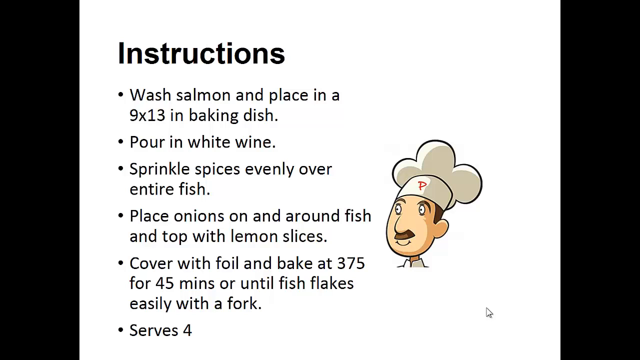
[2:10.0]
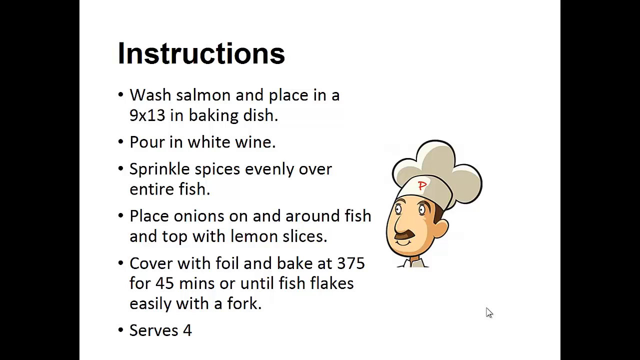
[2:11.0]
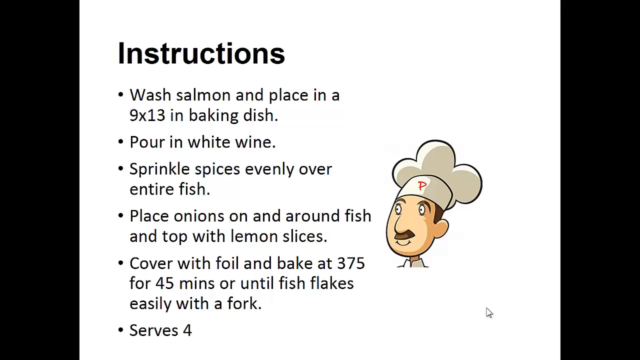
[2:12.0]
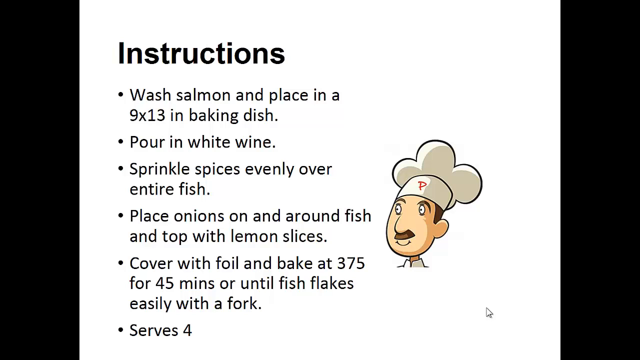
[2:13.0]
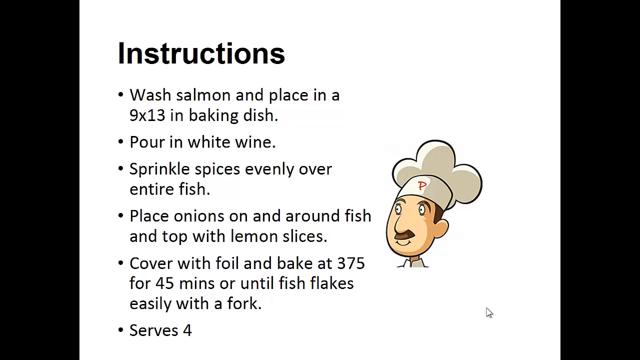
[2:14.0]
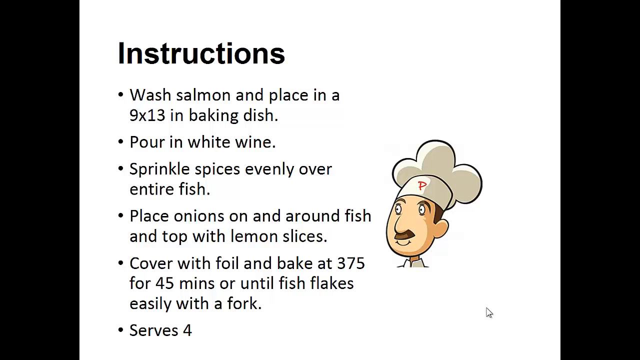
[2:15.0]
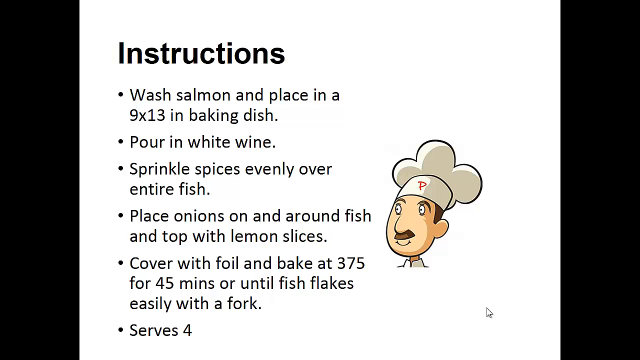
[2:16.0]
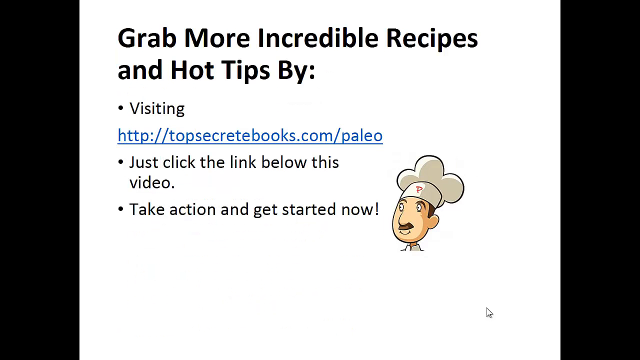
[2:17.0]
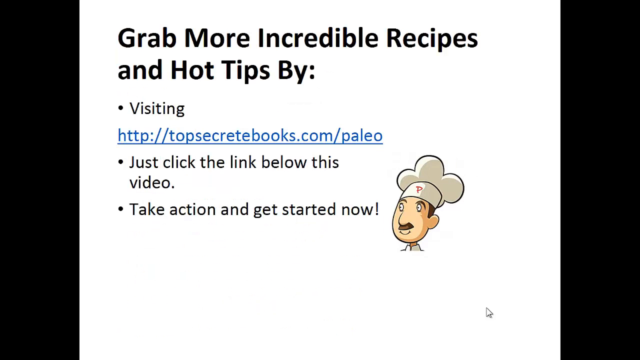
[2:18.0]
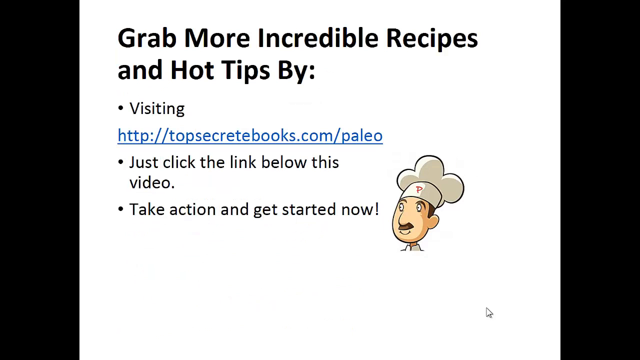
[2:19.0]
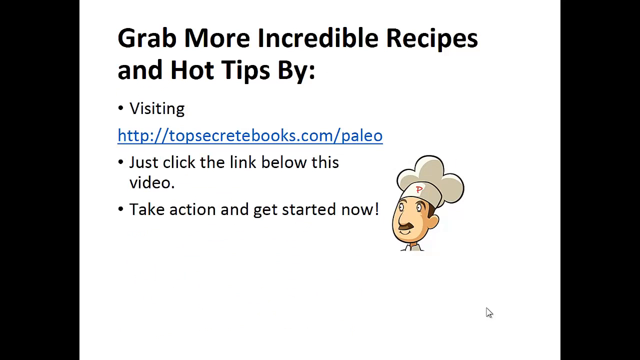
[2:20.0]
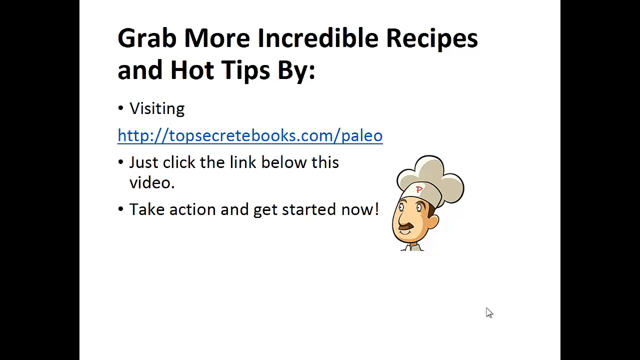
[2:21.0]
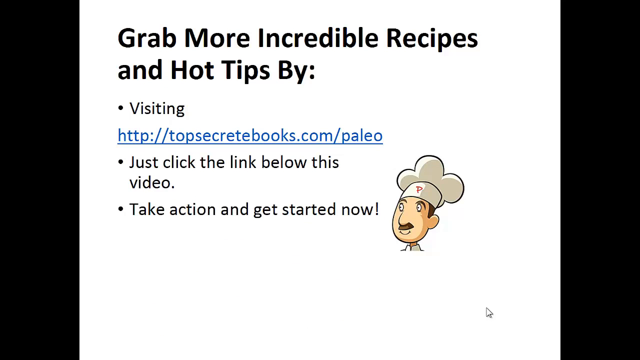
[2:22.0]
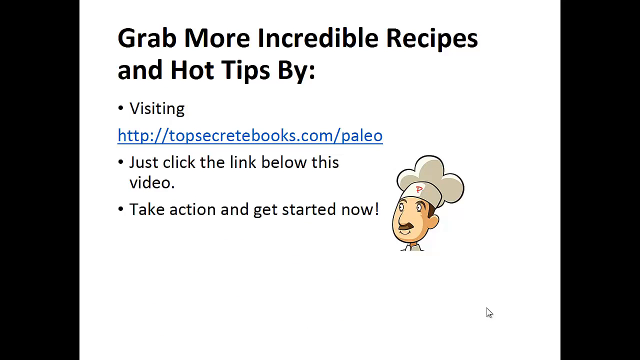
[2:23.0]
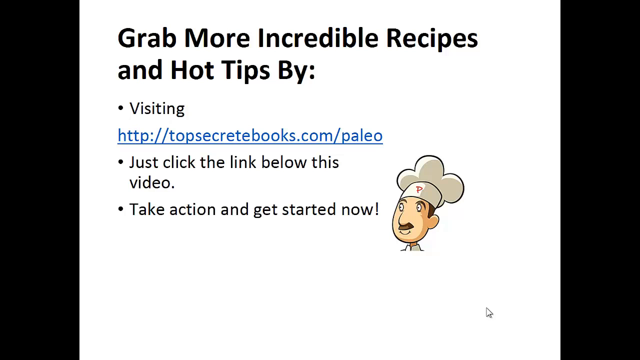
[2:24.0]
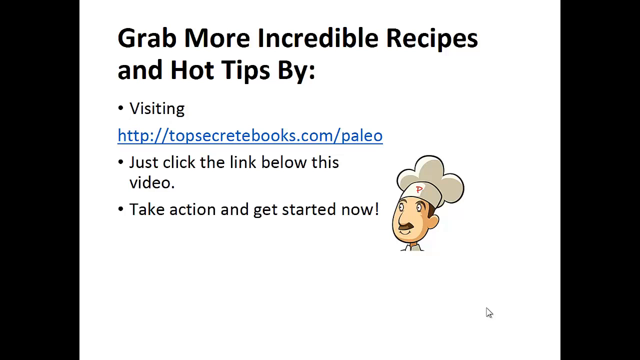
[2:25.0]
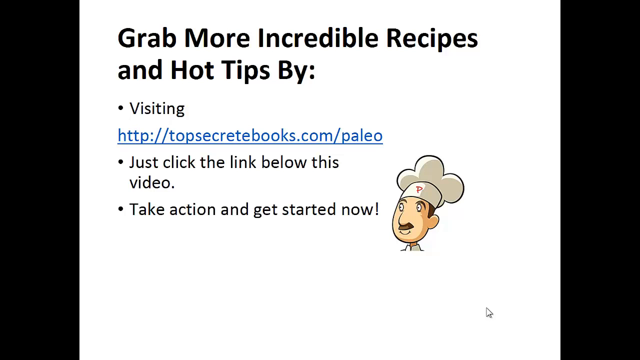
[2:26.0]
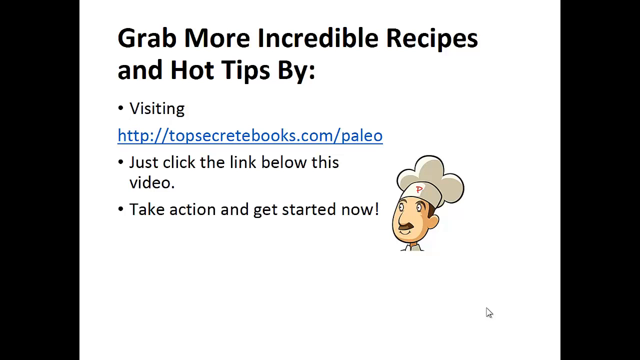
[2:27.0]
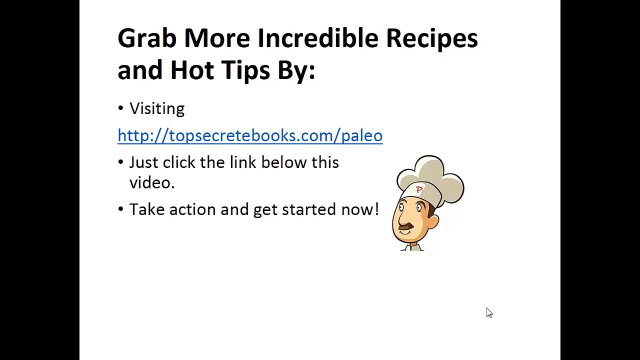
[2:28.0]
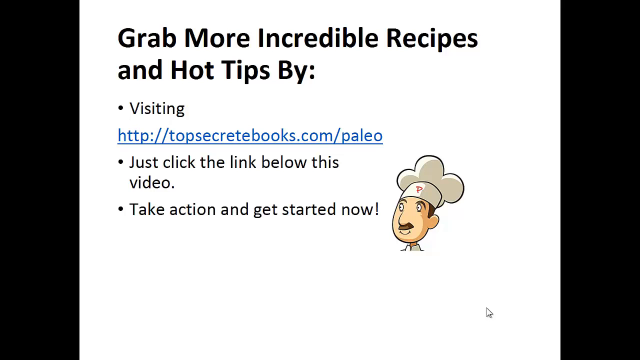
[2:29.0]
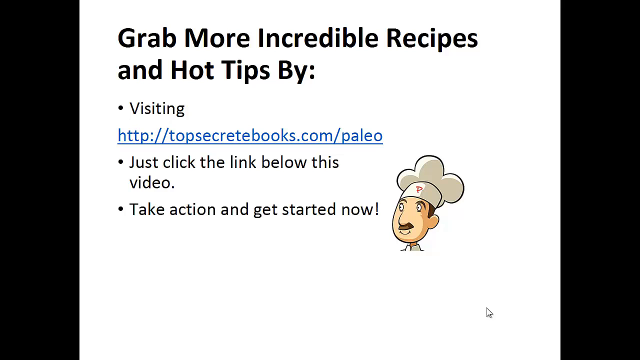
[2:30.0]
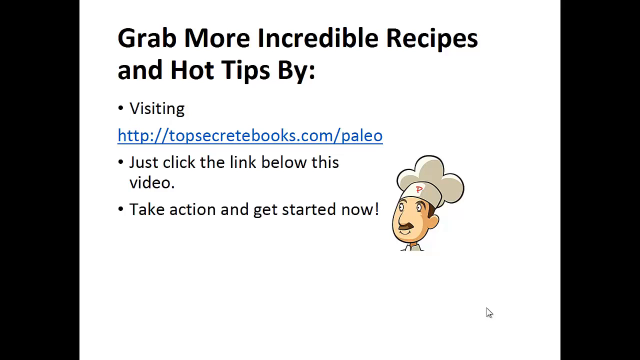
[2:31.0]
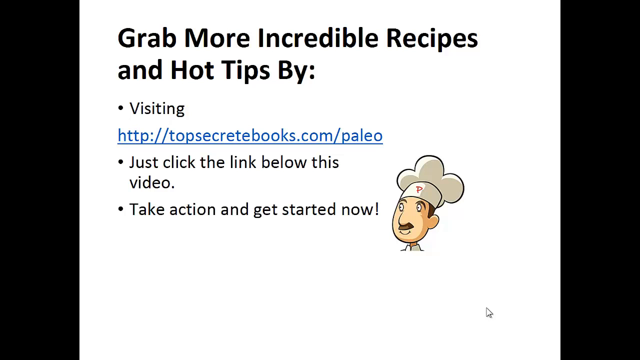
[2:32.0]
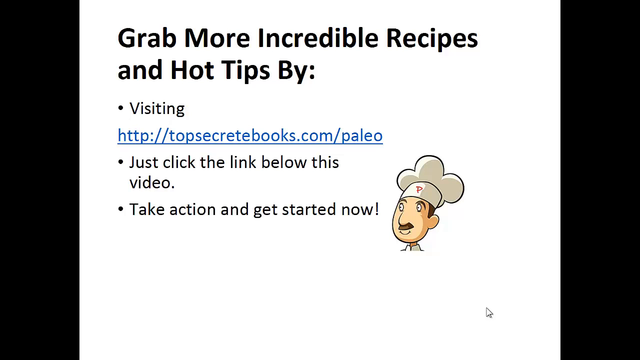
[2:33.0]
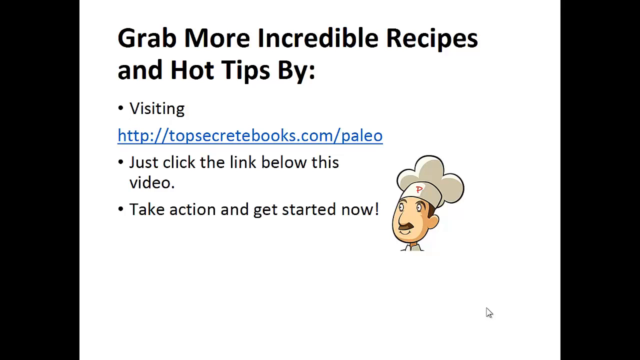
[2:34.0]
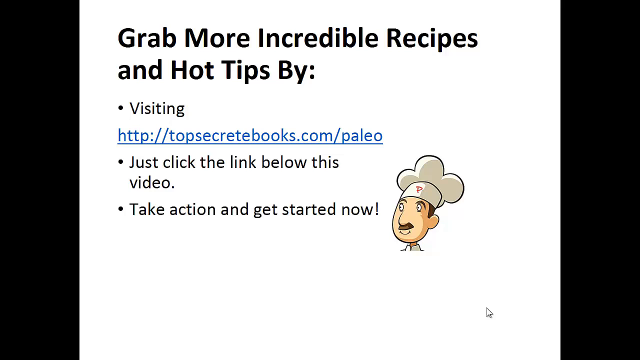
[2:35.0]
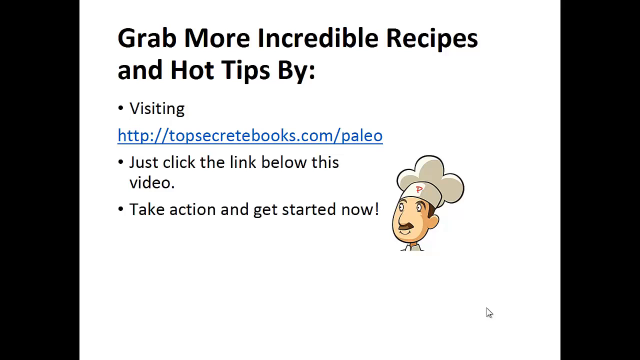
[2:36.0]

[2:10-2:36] The word "Instructions" appears in bold black letters, followed by numbered steps. Step one reads "Wash salmon and place in a 9 by 13 in baking dish". The following steps say to pour in white wine, "Sprinkle spices evenly on the entire fish", place the onions on and around the fish and top with lemon slices, then "cover with foil and bake at 375 for 45 minutes or until the fish flakes easily with a fork".